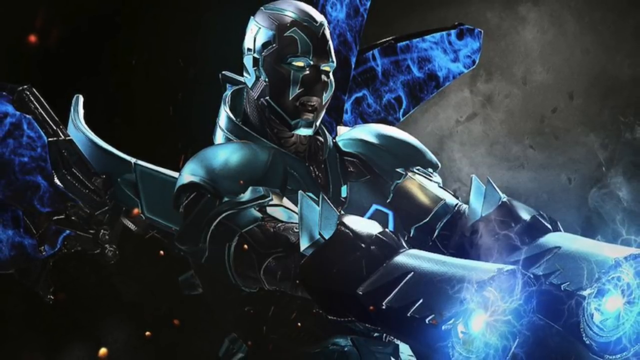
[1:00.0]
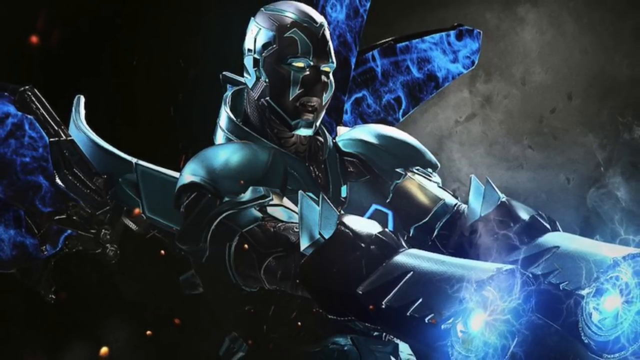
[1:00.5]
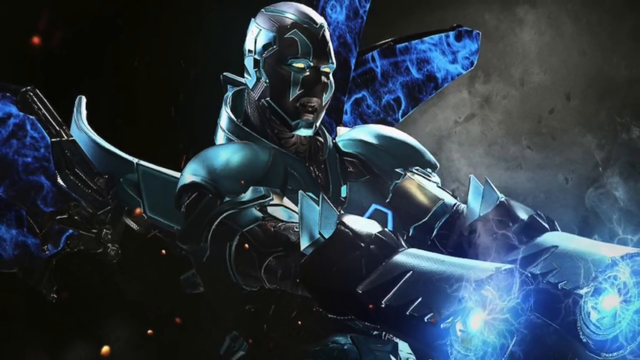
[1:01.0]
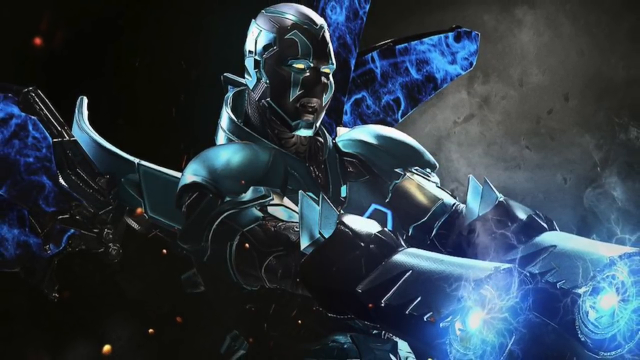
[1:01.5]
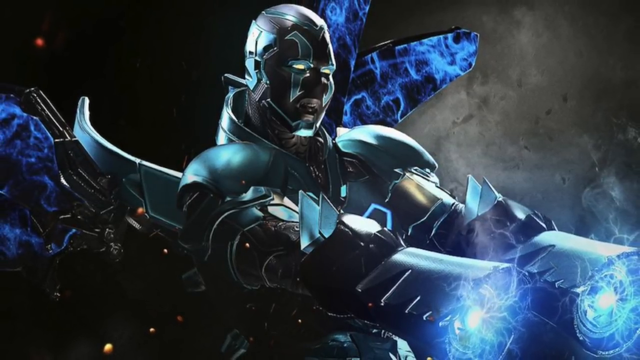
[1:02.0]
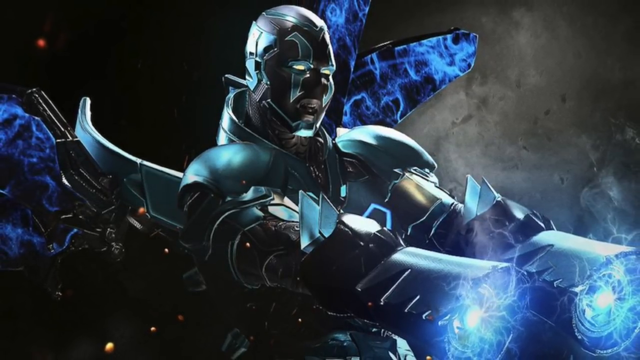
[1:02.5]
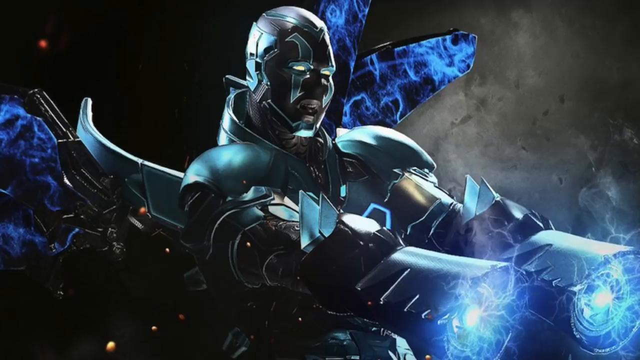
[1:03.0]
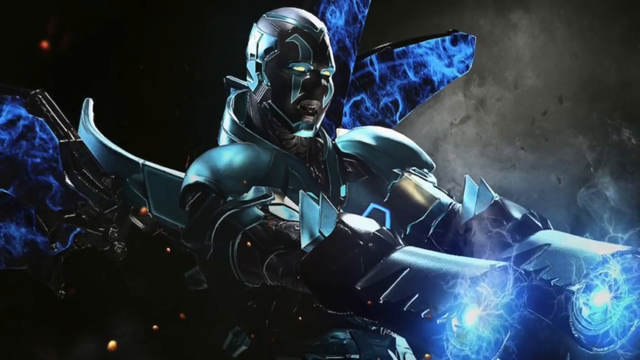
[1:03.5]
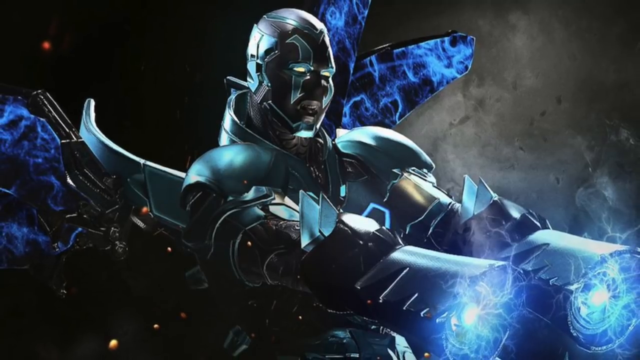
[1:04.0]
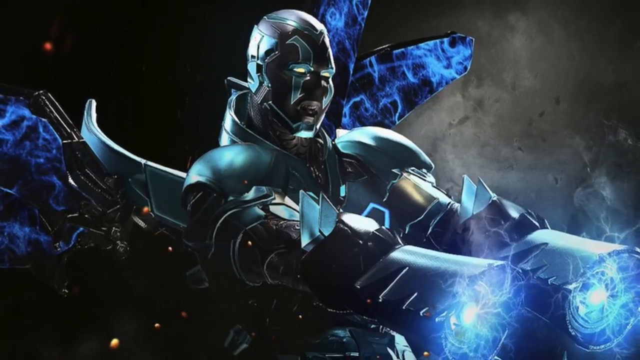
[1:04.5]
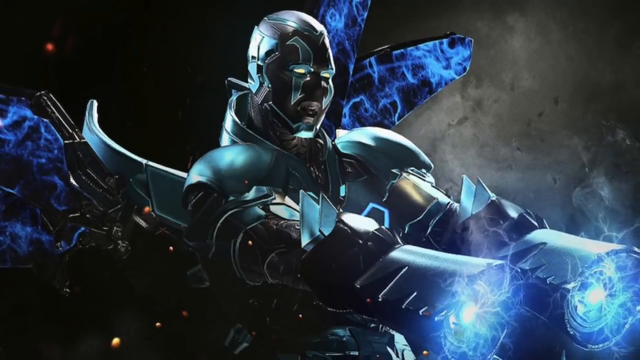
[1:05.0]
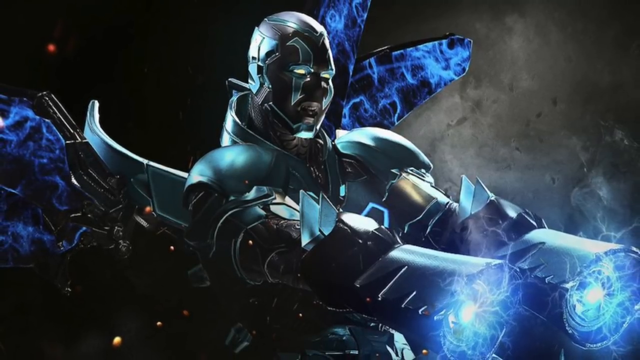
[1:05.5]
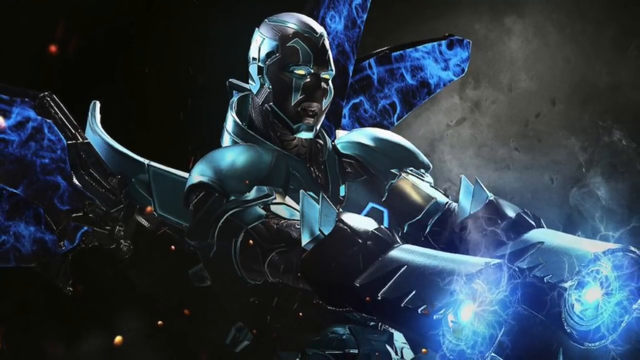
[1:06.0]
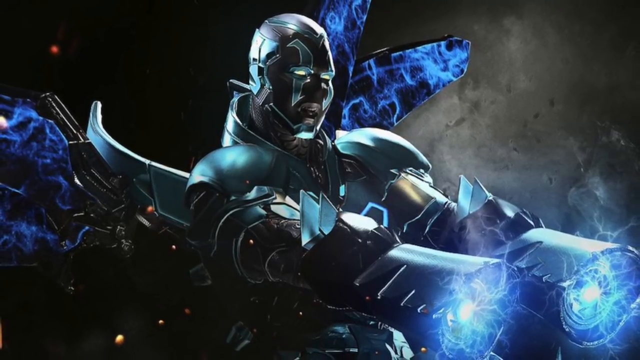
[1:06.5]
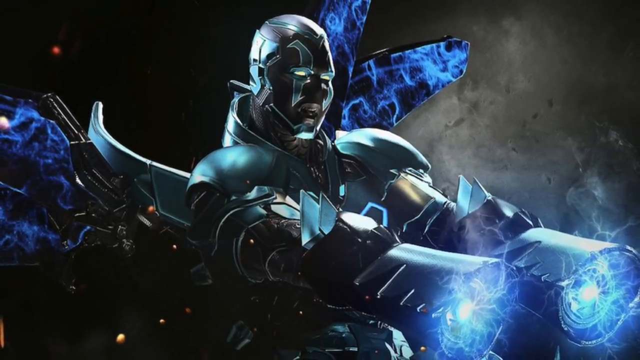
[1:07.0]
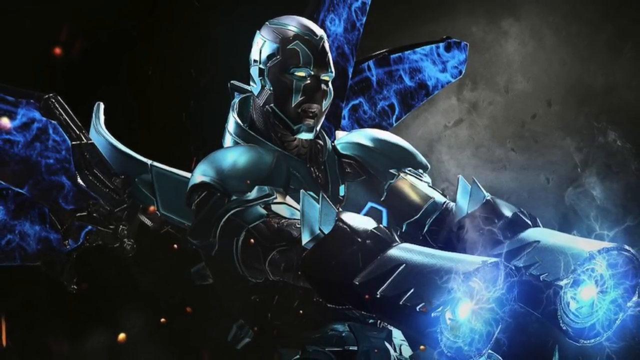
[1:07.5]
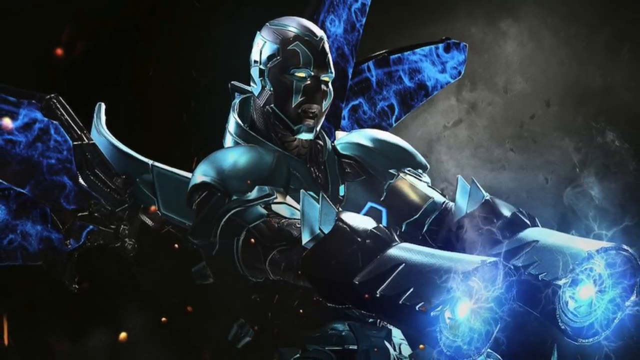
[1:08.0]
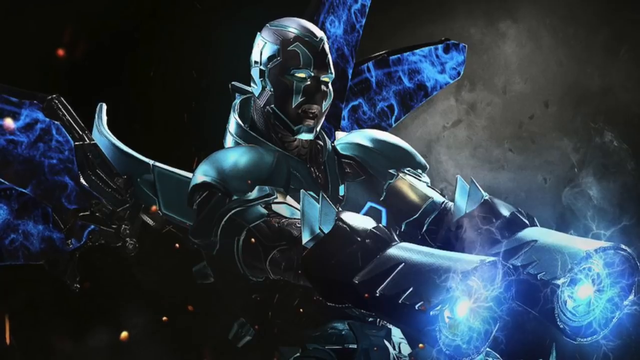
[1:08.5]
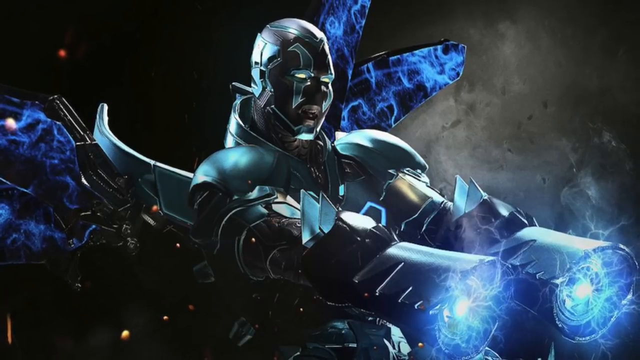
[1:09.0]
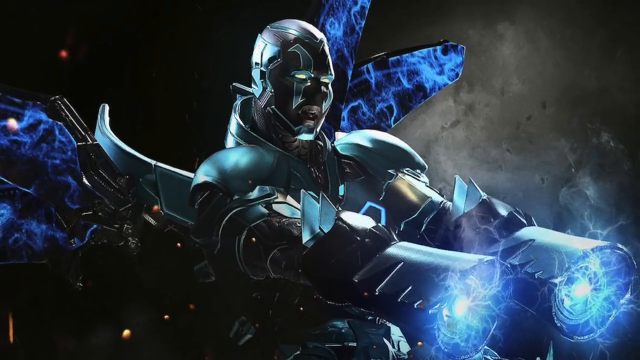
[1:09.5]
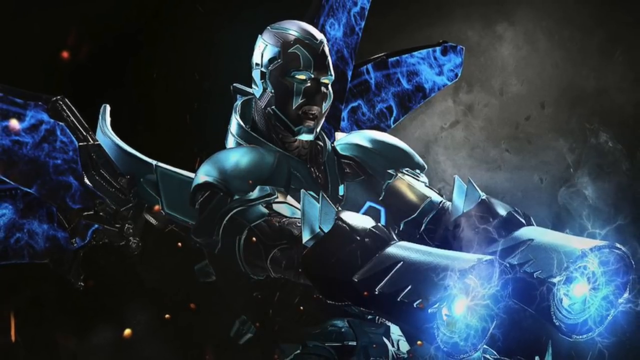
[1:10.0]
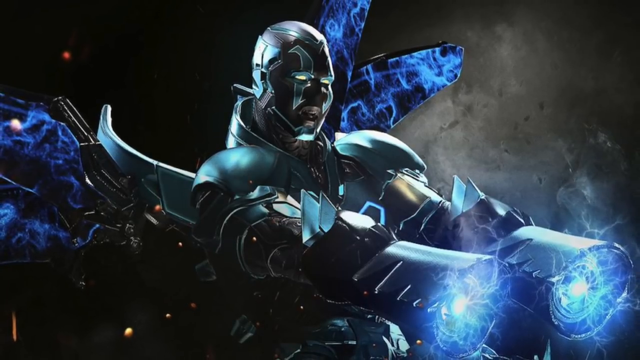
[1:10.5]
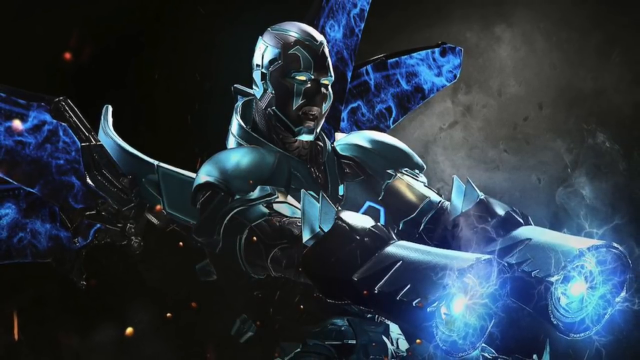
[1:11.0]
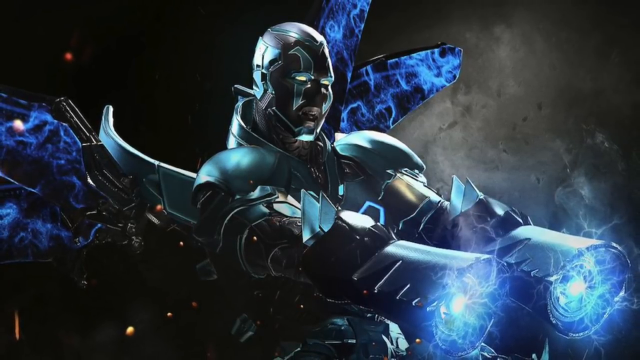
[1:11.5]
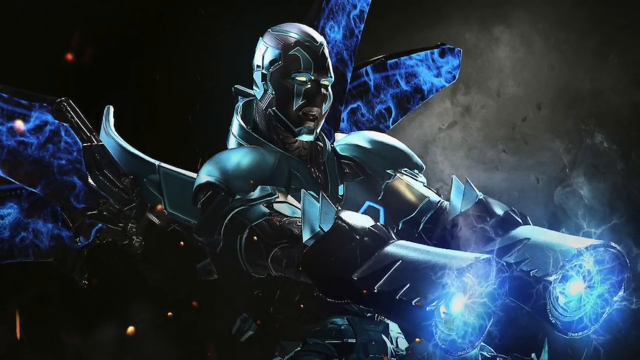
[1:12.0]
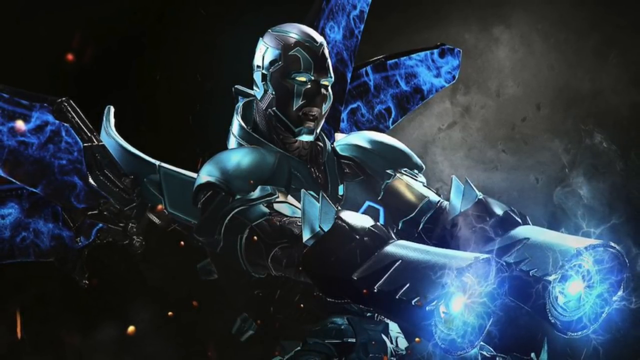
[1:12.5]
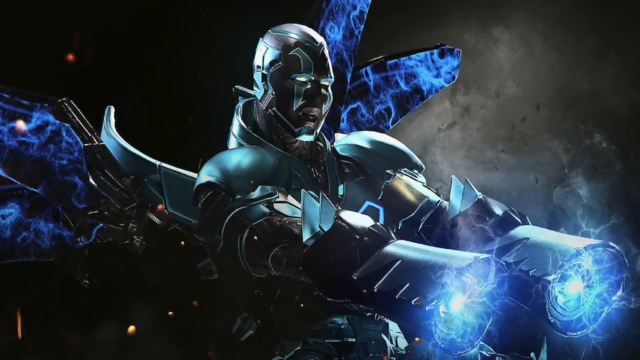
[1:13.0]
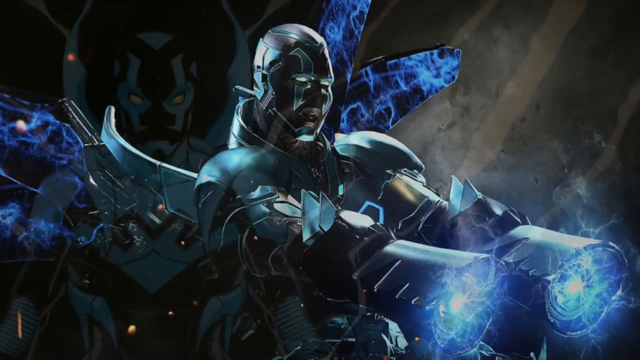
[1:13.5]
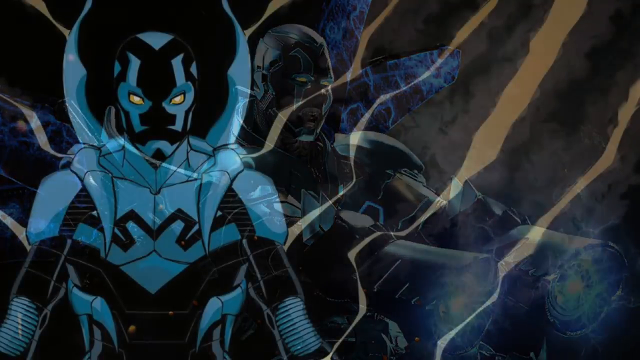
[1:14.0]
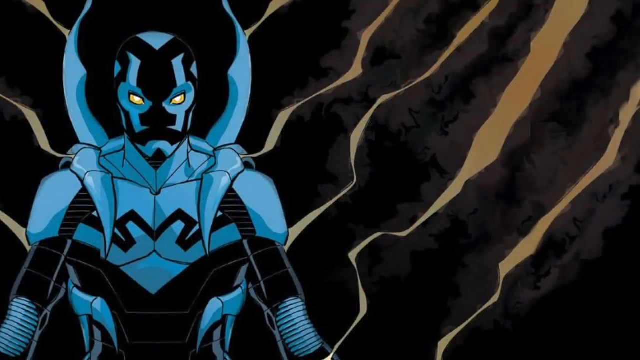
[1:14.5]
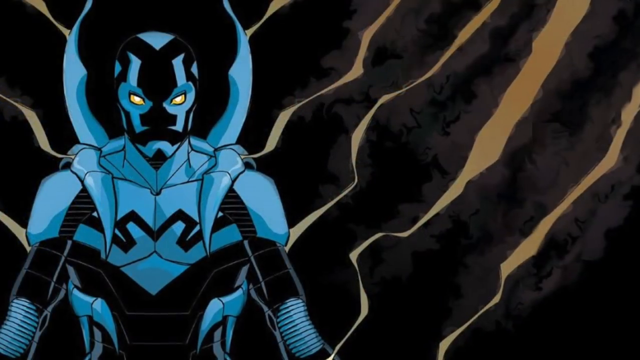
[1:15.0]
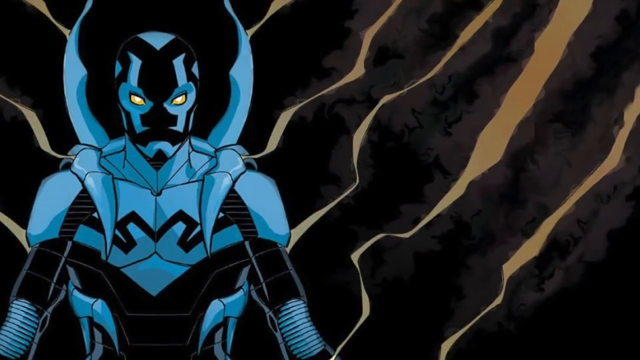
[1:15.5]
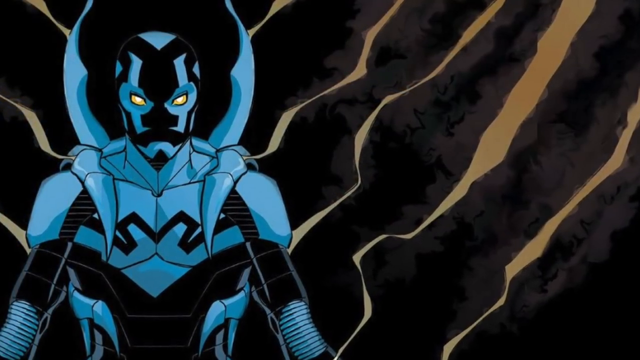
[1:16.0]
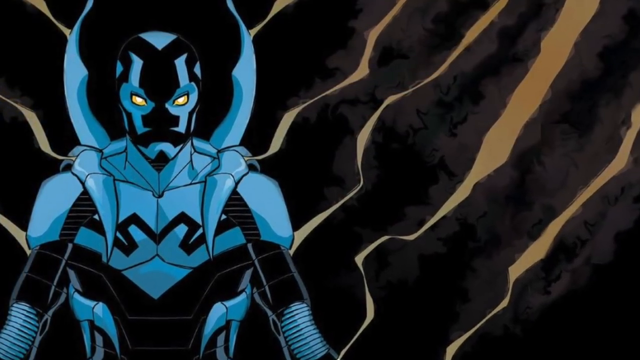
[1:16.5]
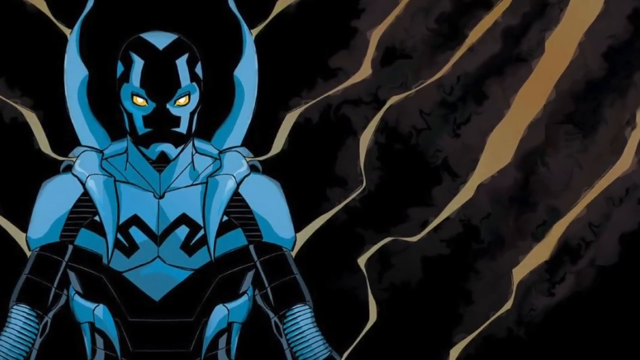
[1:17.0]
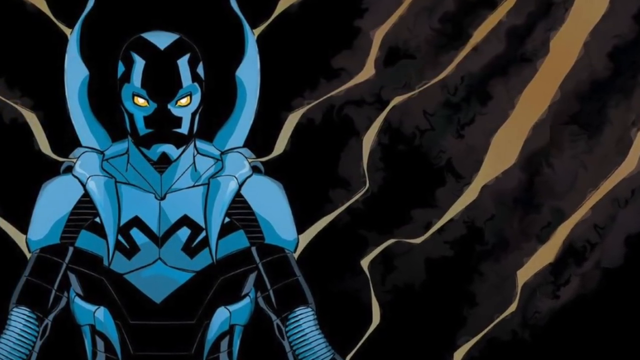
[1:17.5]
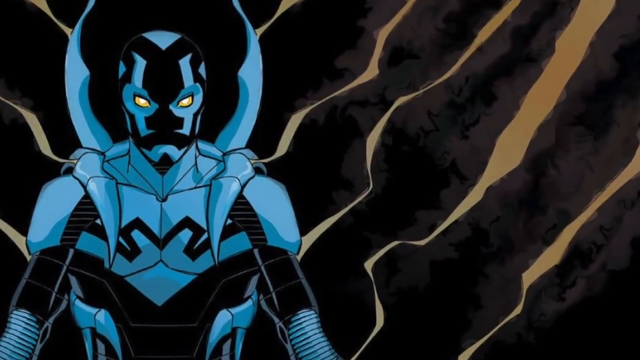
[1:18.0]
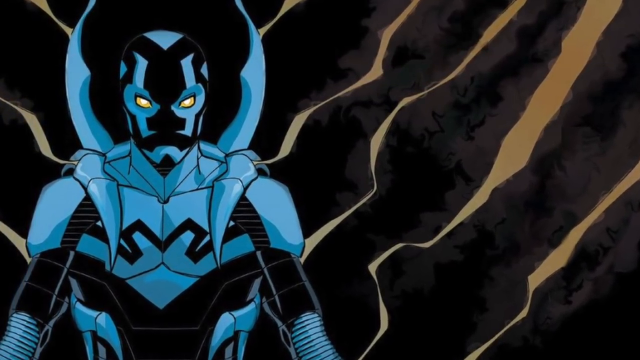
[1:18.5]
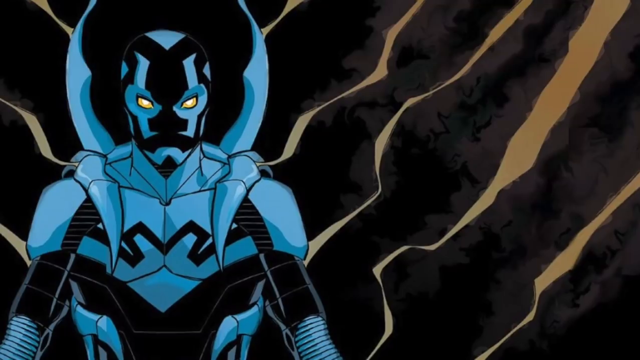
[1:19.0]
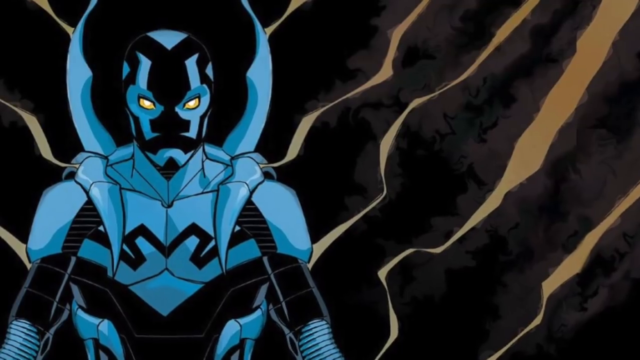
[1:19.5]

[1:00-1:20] The menacing armoured figure sort of drifts by what looks like a planet or a moon, presumably on a vehicle, and the camera starts to pan out to show more of the frame. The scene then changes completely, and the animation changes too: the previous scene was more 3D, while this one is more 2D and more animated, showing what looks like almost the same sort of superhero in a different cartoon version. He wears cyan armour with black detail, looks kind of scary, and has glowing gold eyes. The background is black with gold streaks coming down, all a little abstract, and it is hard to tell where the character is. The figure is very symmetrical.